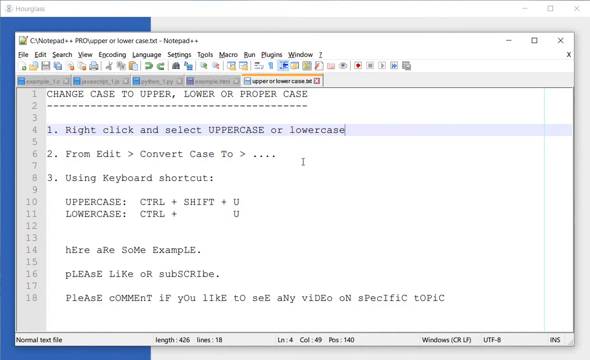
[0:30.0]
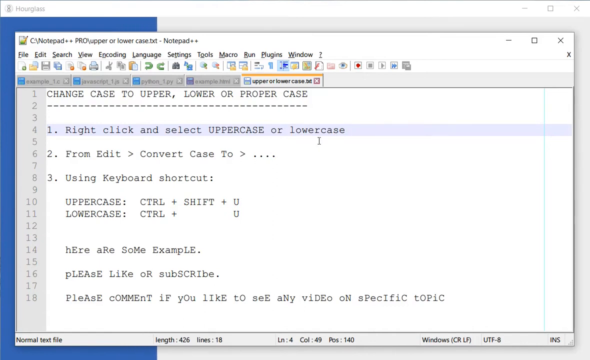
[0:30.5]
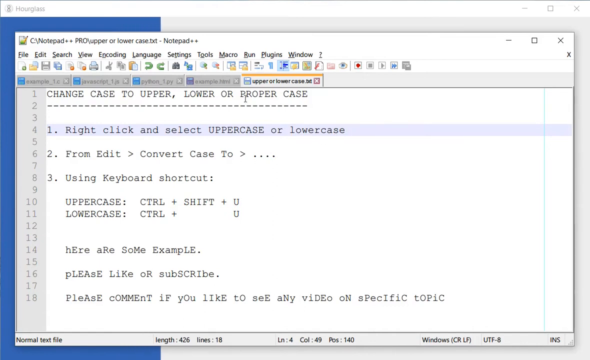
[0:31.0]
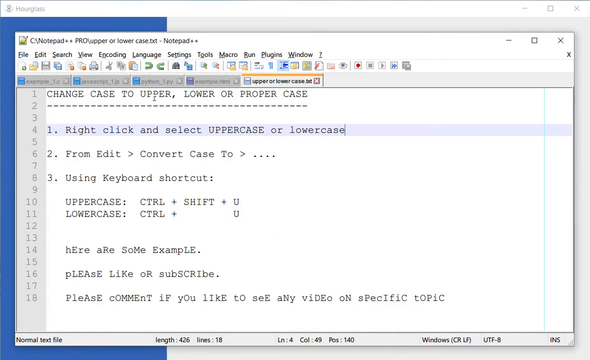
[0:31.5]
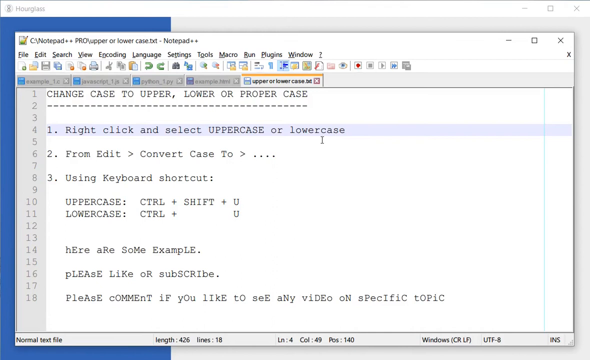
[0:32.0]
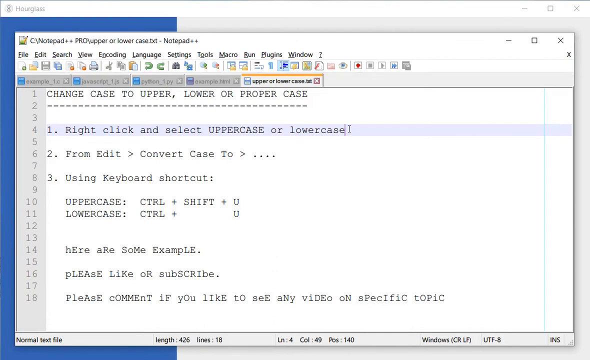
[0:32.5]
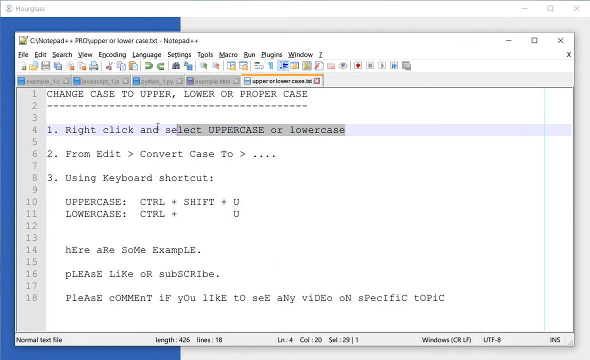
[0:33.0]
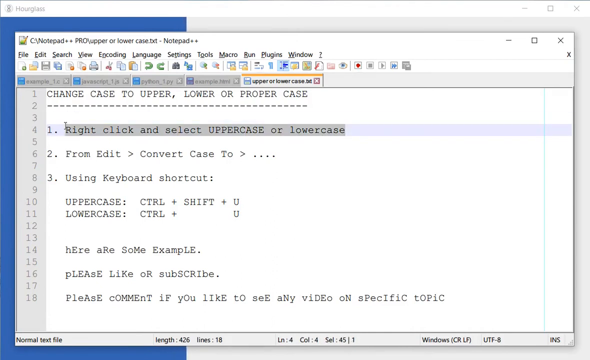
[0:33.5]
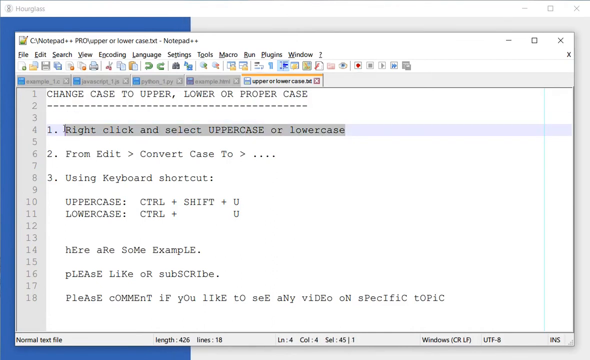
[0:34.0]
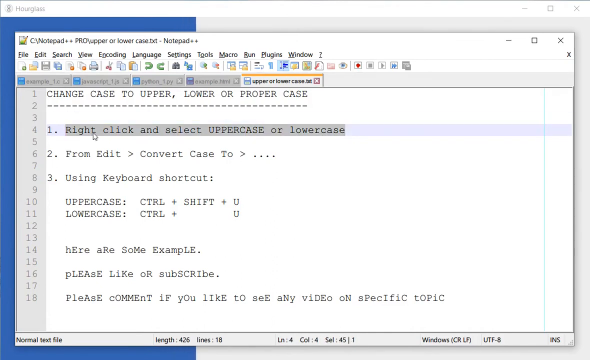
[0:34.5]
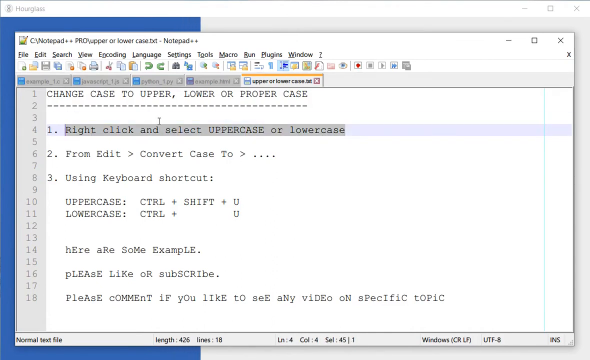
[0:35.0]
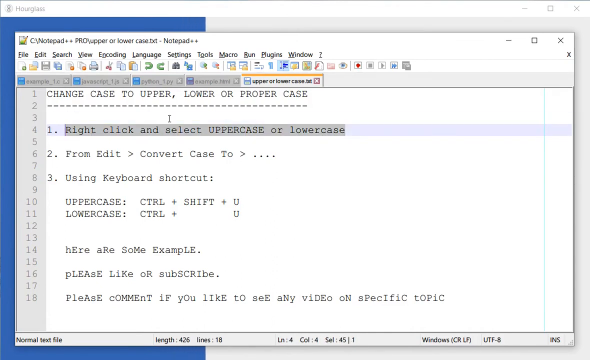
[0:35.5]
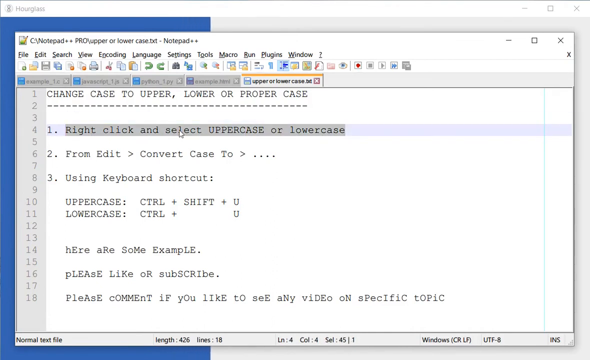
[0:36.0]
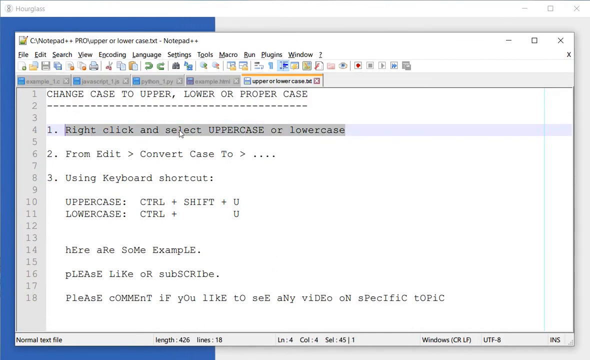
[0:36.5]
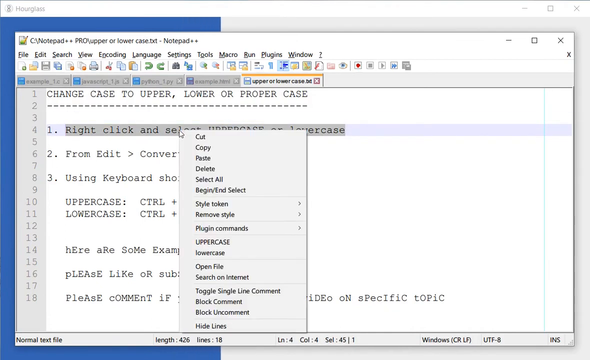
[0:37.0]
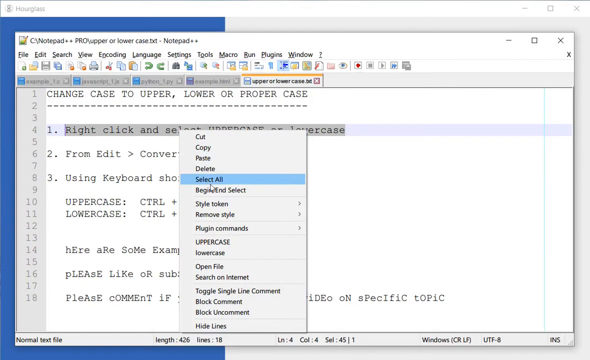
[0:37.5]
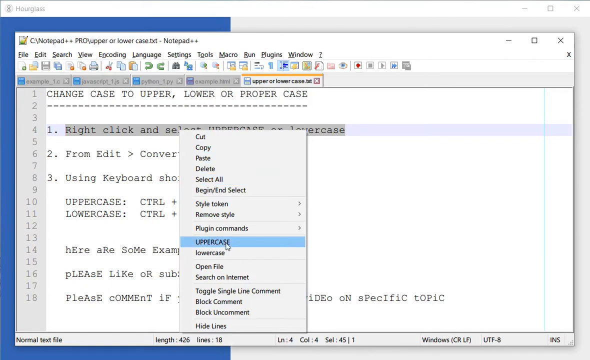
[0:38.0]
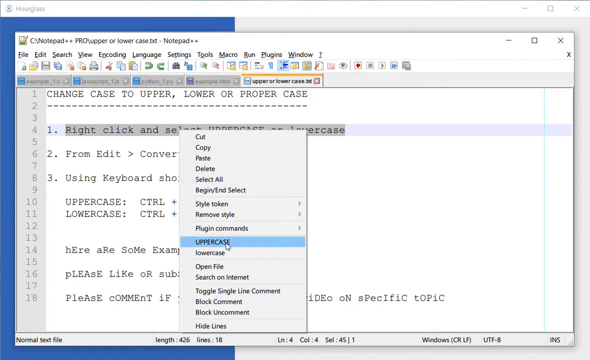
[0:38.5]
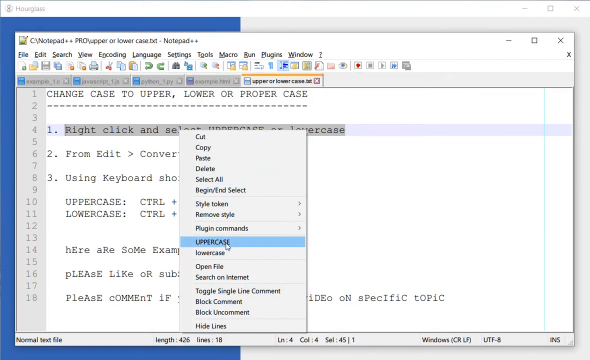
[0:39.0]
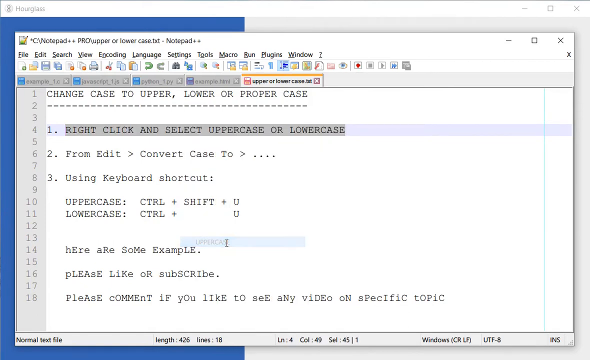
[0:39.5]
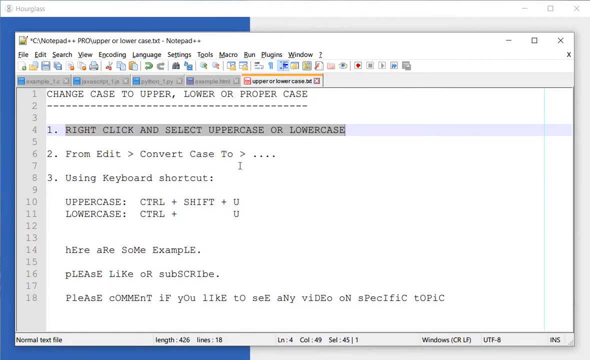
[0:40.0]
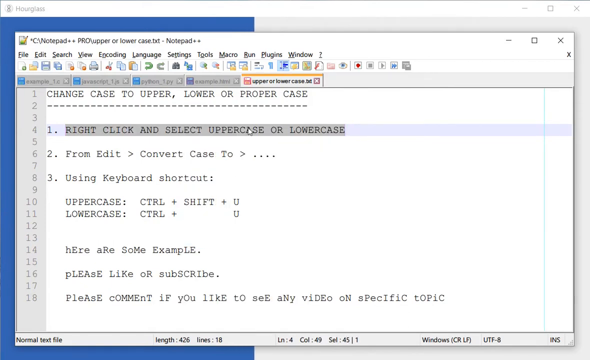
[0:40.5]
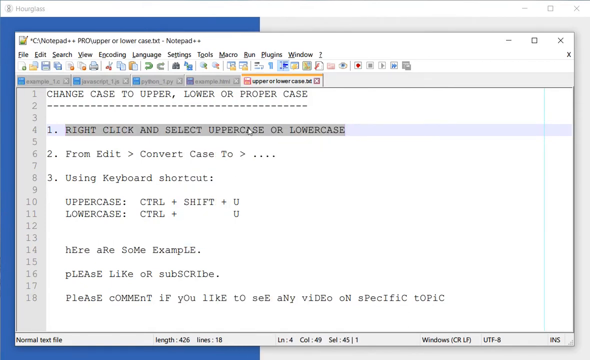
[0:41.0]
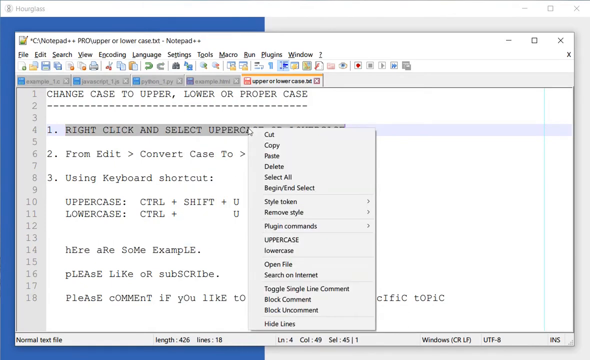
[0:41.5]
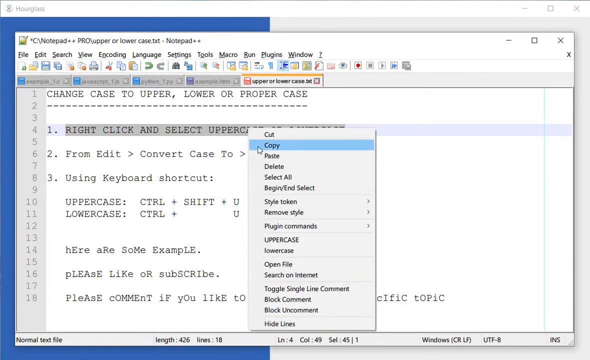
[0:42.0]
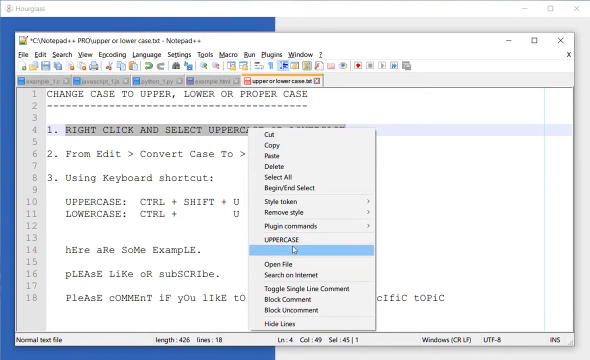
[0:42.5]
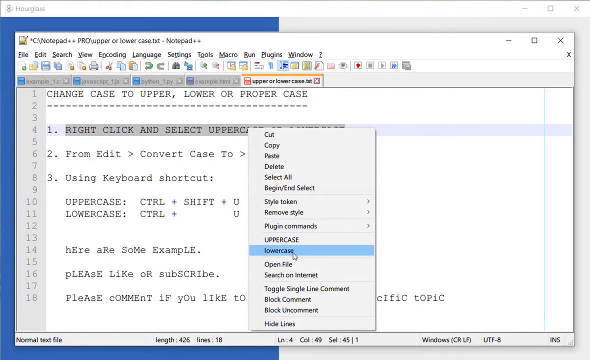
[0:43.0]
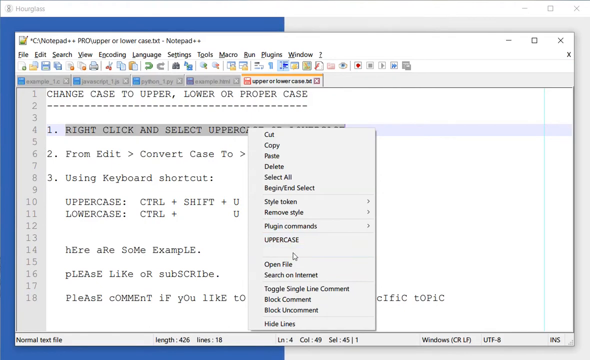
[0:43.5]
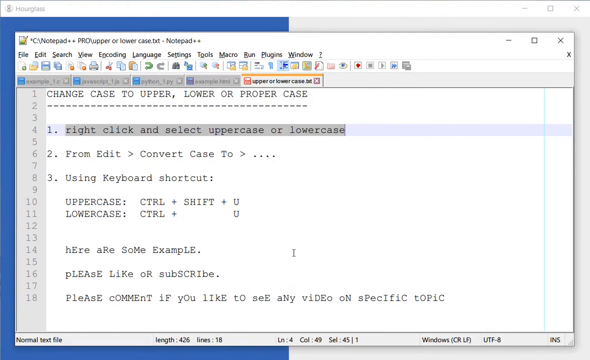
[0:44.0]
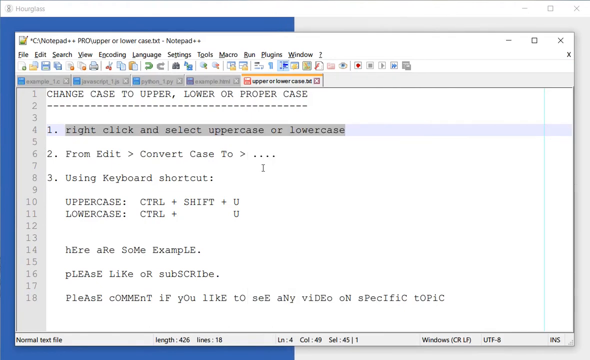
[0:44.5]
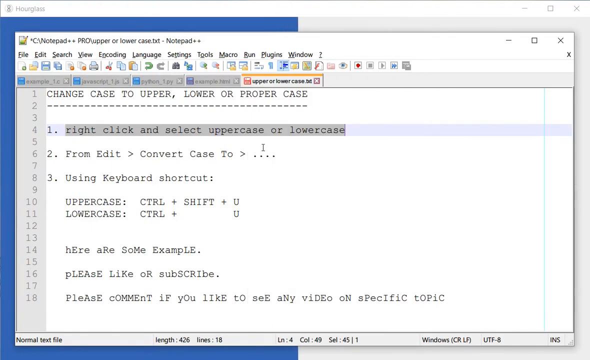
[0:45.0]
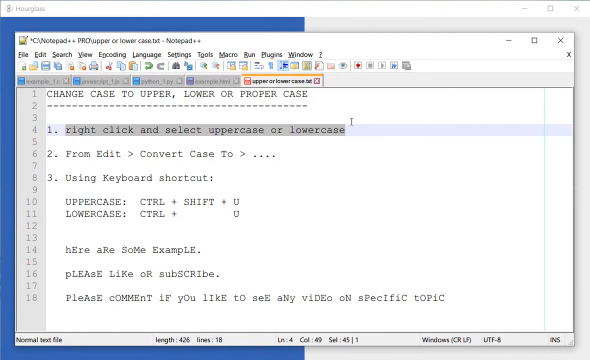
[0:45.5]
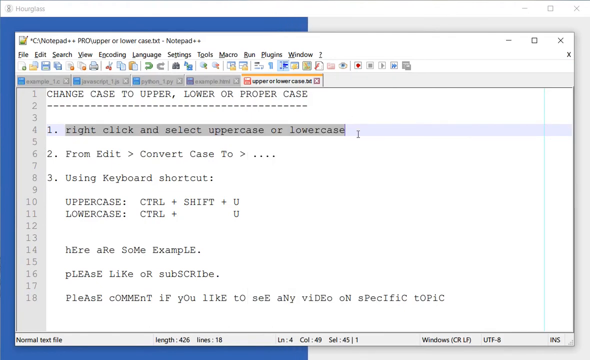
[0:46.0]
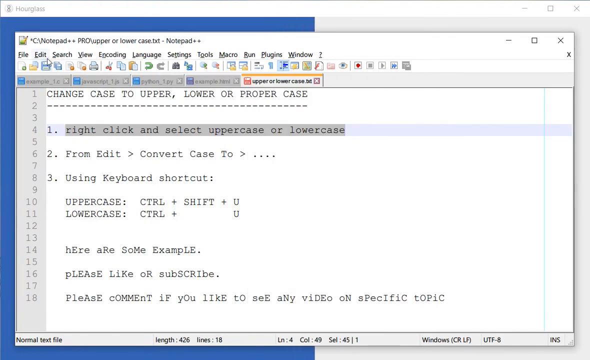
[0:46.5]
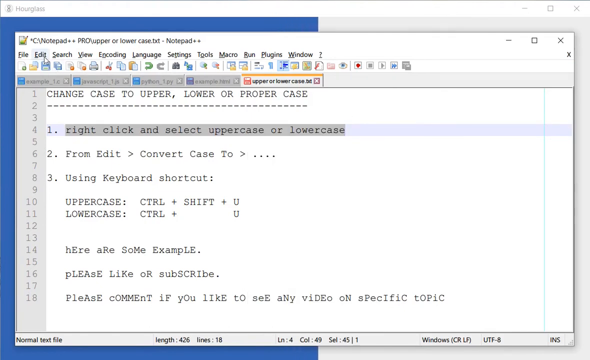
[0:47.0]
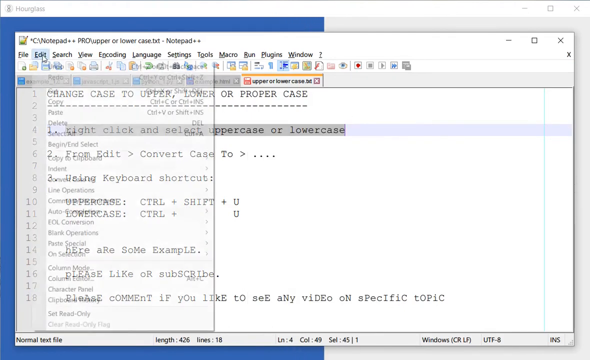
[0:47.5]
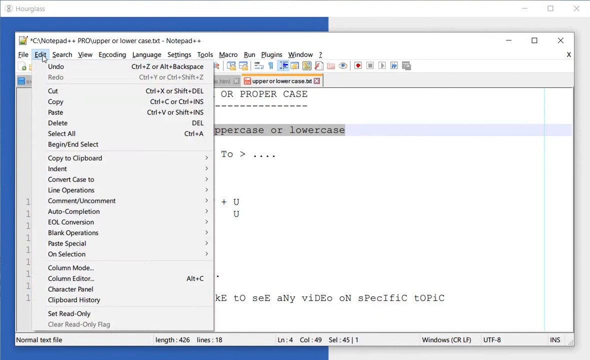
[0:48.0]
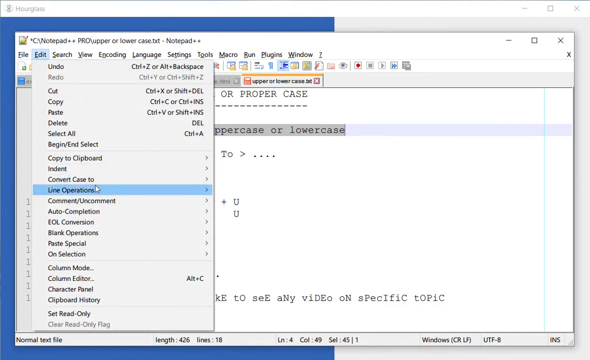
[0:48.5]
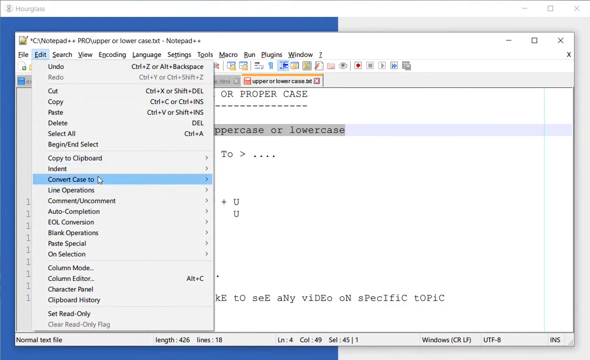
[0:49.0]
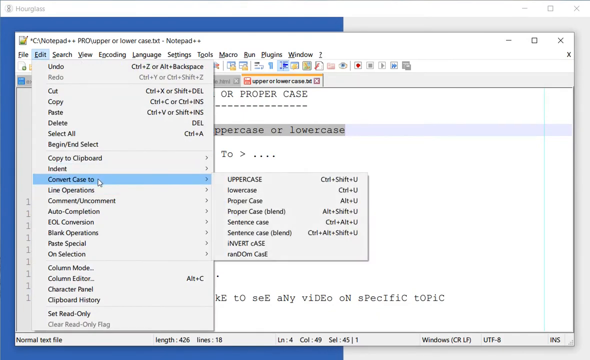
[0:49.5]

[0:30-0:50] The little counter is still in the background. The program is Notepad++. The user takes the examples from the text file and goes through them, showing different ways to change text to uppercase or lowercase. Text is selected, then Edit is opened in the toolbar, then Convert case to, and a conversion type, uppercase or lowercase, is chosen.